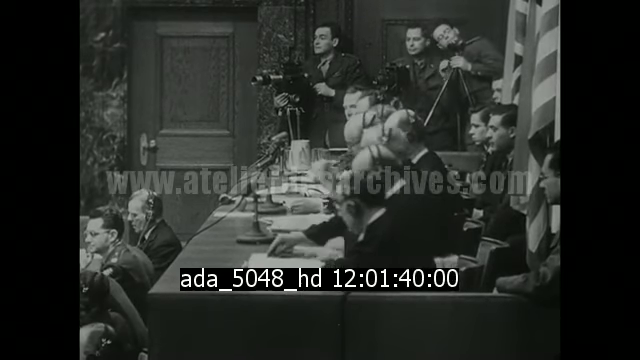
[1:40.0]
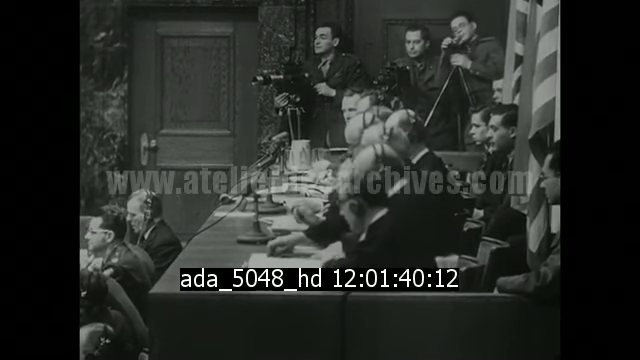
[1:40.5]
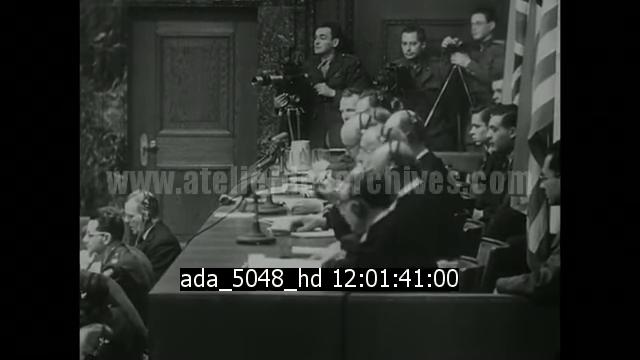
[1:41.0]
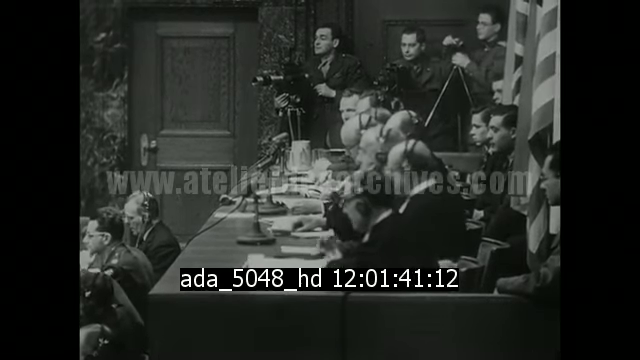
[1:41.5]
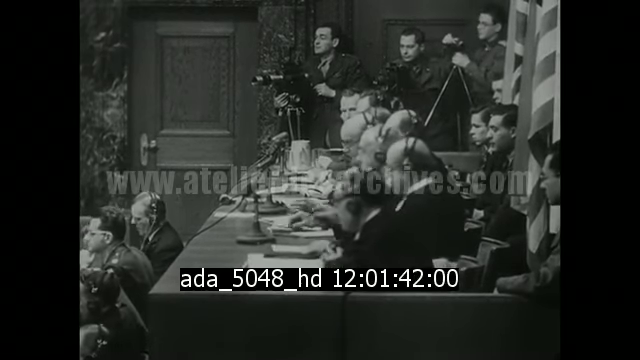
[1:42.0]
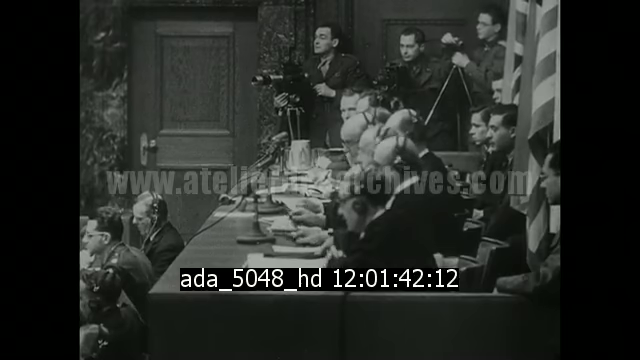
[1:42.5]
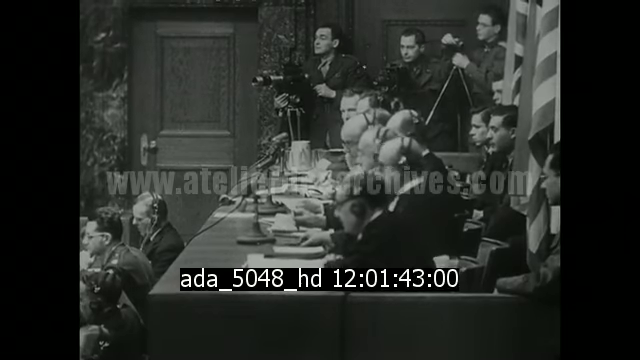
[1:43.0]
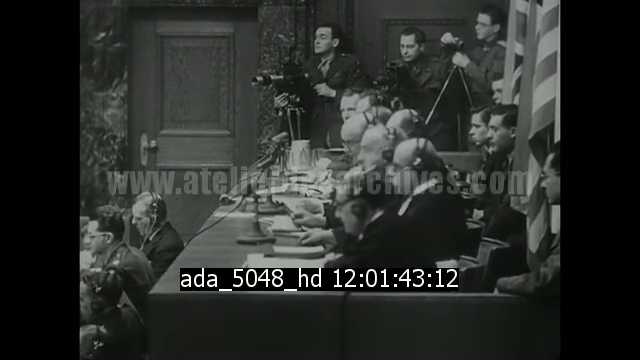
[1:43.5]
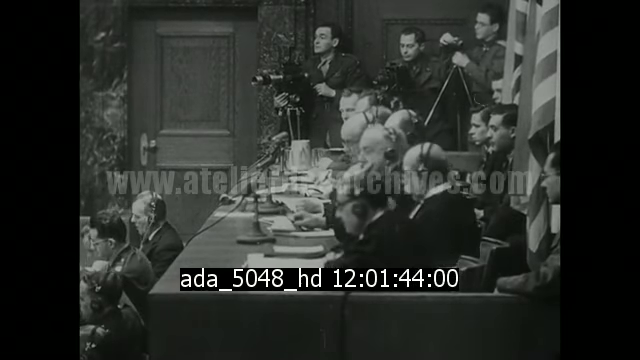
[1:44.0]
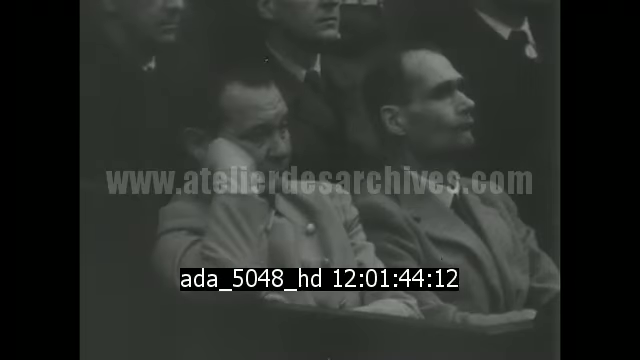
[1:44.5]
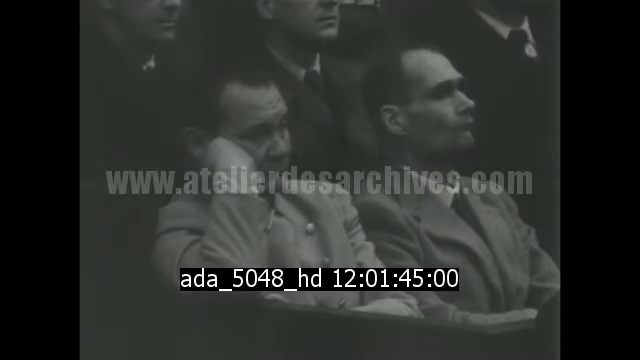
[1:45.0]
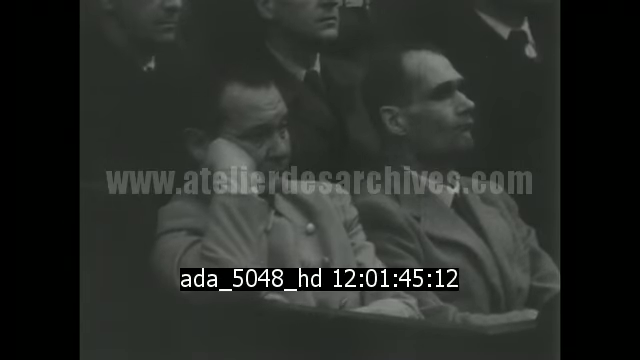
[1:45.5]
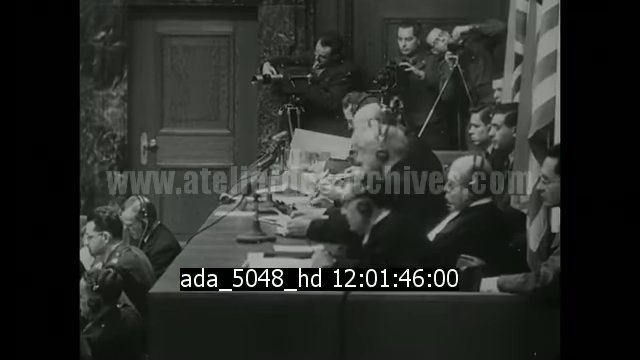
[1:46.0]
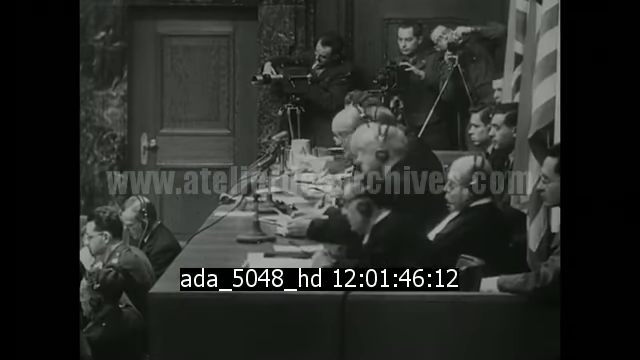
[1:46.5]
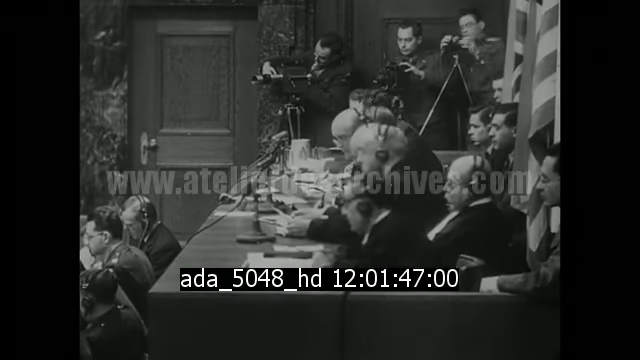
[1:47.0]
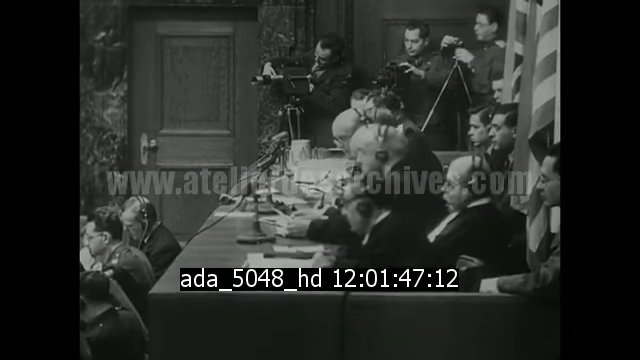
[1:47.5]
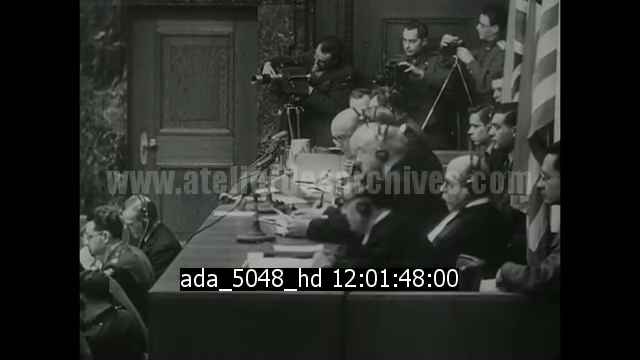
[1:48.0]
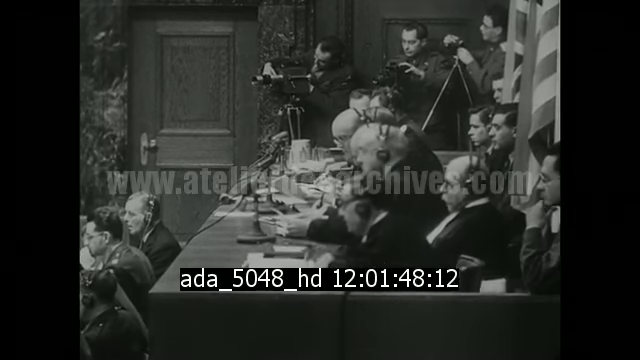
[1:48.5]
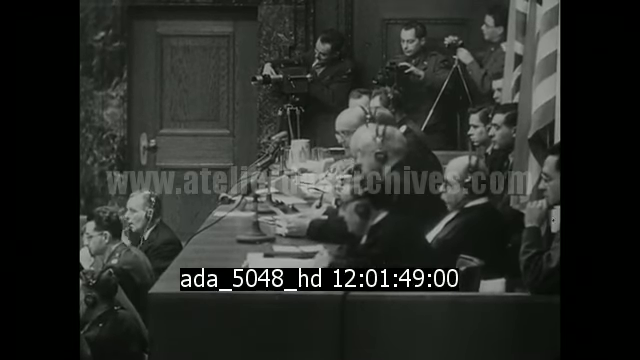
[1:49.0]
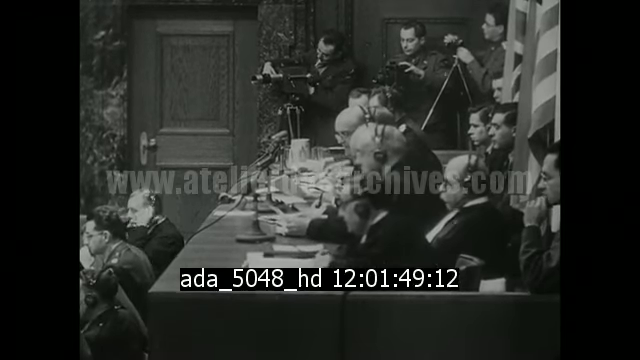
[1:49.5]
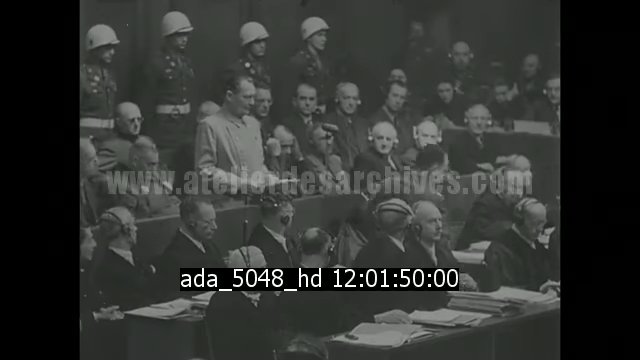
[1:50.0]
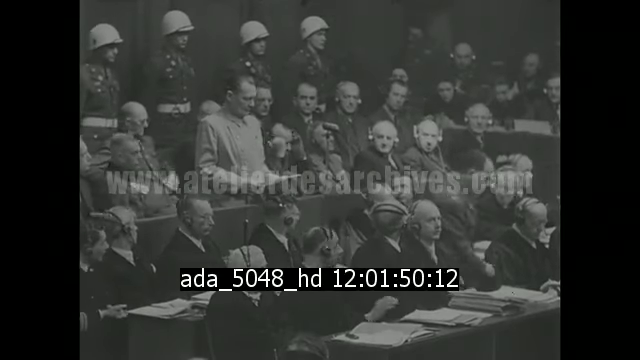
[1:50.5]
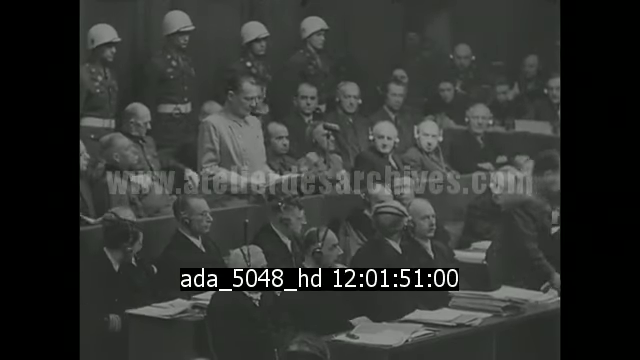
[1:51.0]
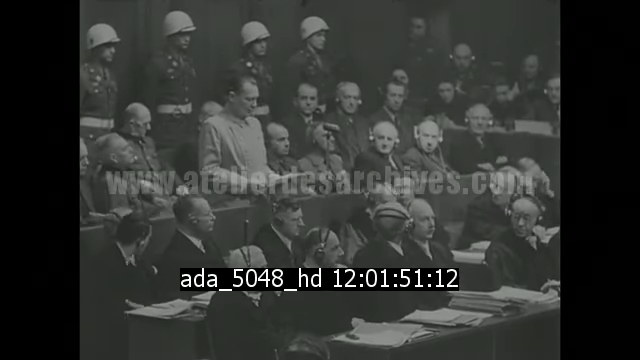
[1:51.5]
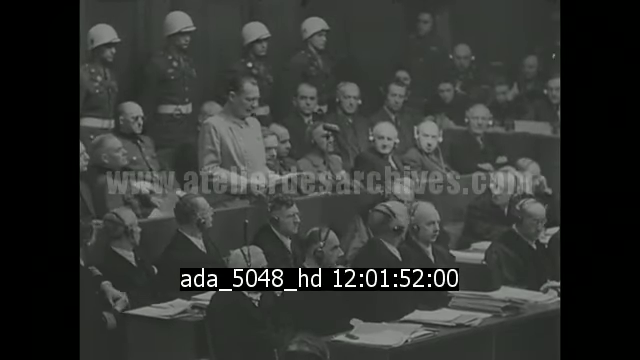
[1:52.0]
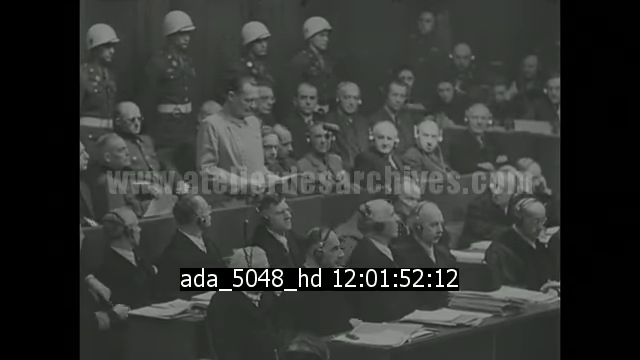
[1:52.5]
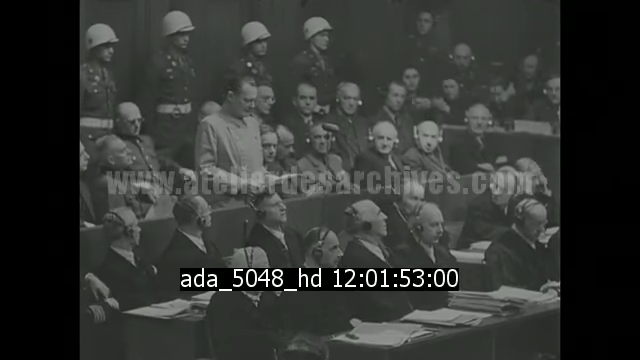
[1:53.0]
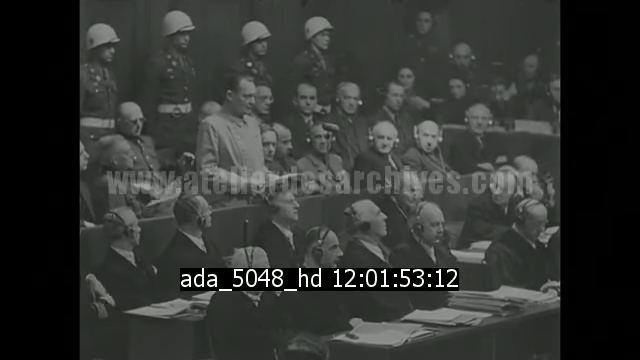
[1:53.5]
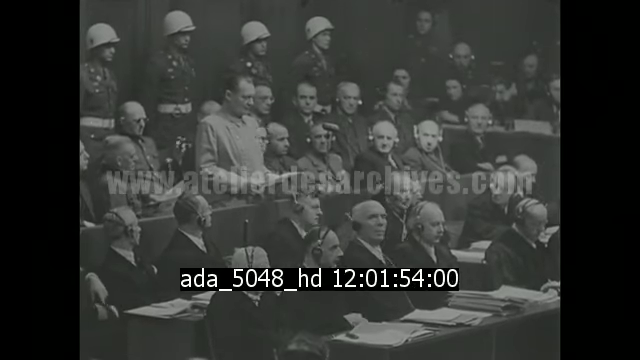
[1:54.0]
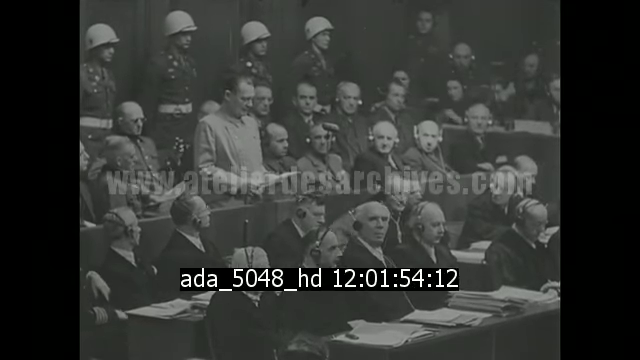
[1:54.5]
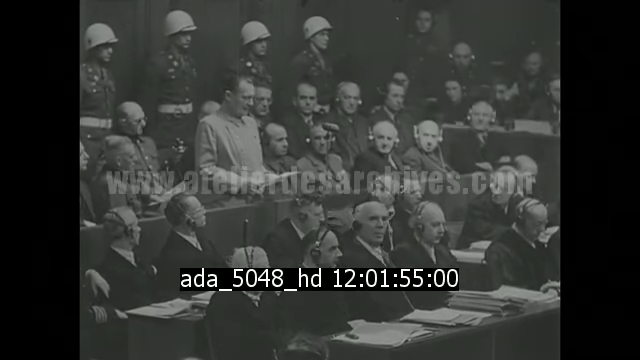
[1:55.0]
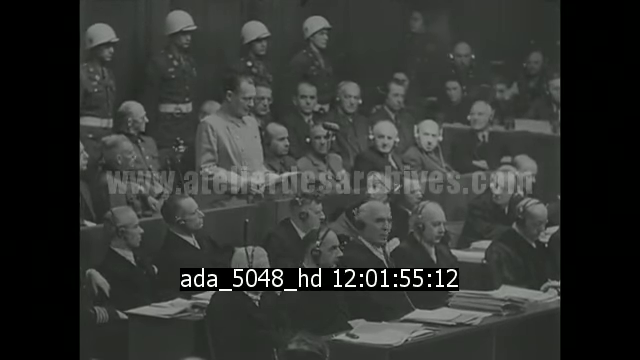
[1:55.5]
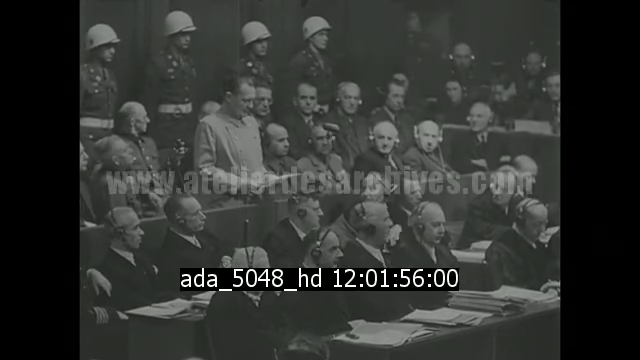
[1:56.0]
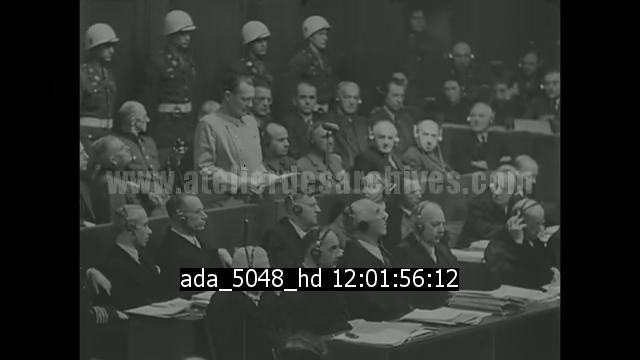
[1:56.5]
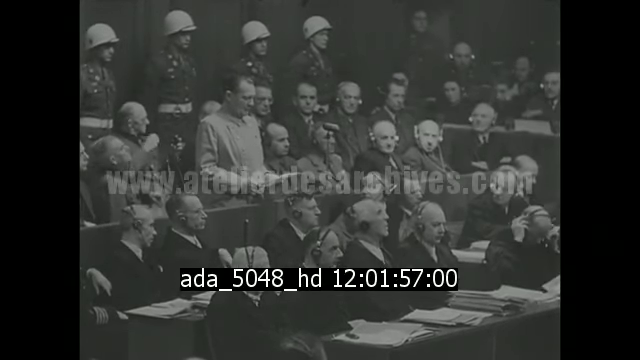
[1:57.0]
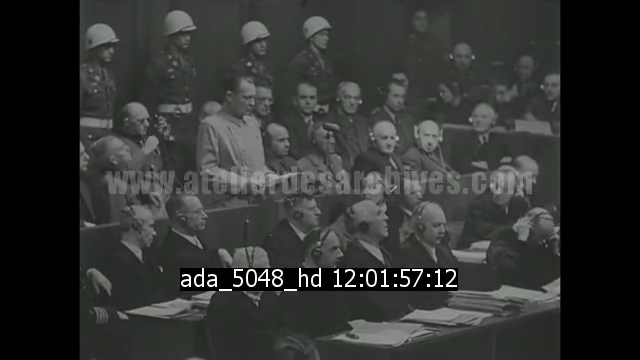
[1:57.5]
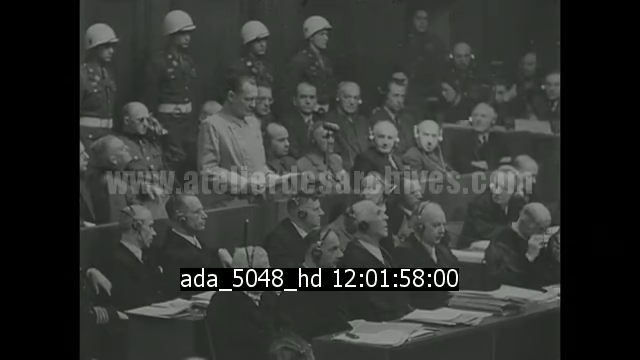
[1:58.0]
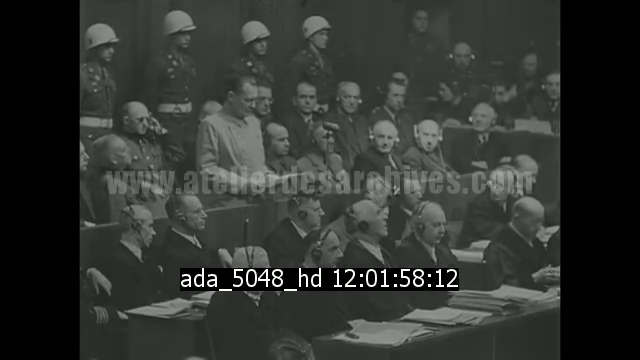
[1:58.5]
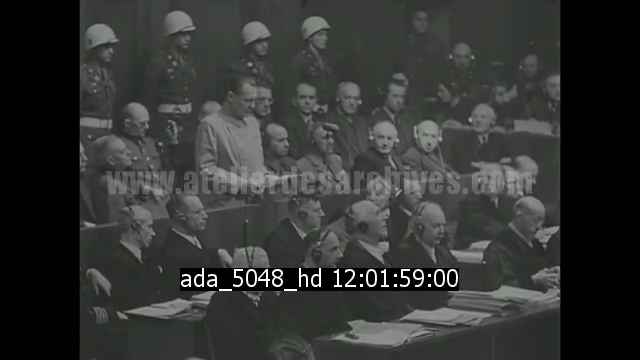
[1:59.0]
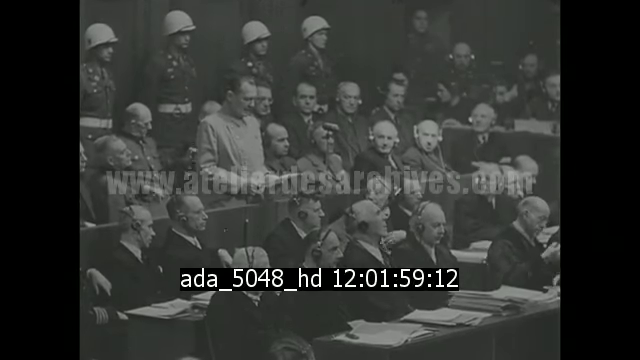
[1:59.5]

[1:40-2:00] Men involved in the trial and the accused from the Nazi regime are sitting and waiting, with many soldiers in the background. An American and British flag is in the background.